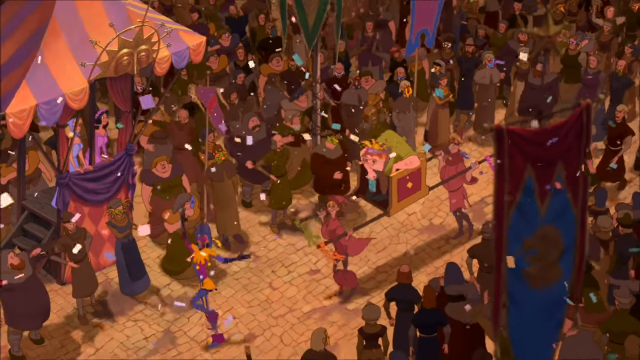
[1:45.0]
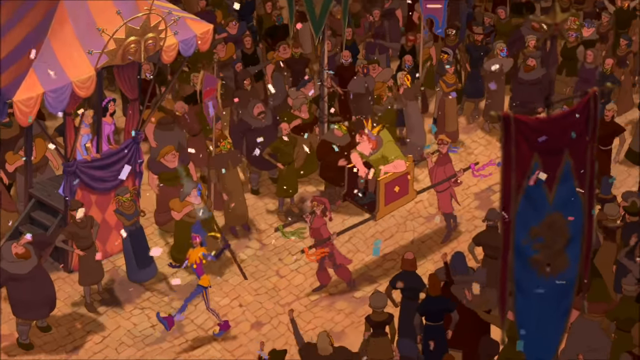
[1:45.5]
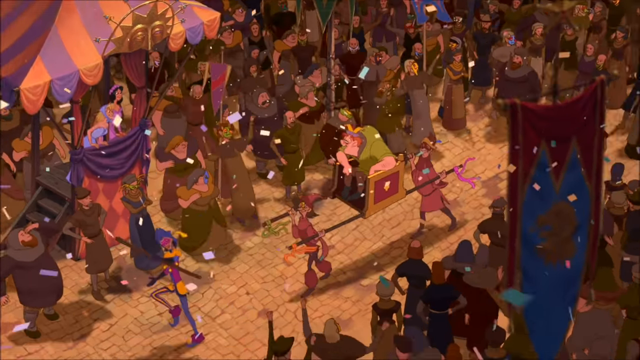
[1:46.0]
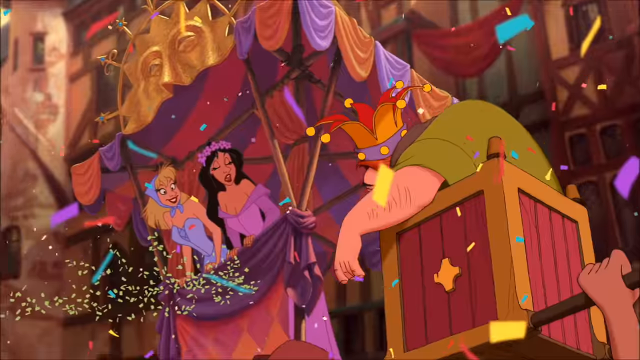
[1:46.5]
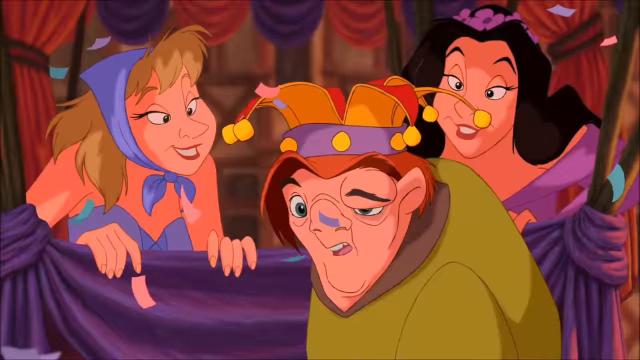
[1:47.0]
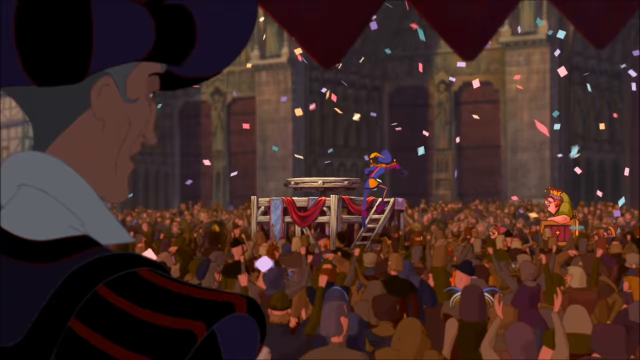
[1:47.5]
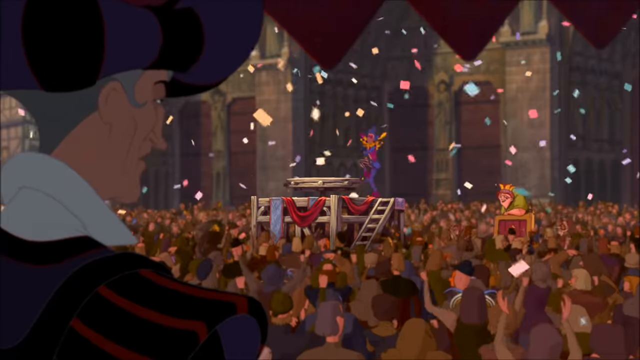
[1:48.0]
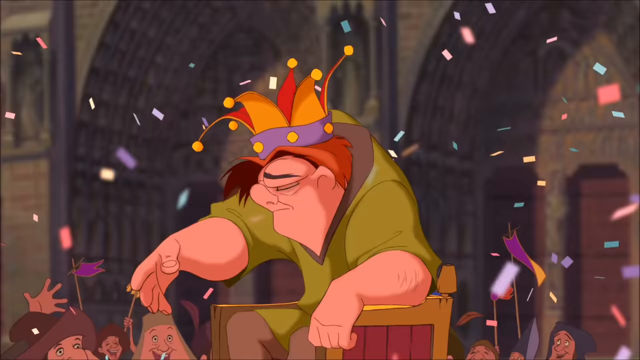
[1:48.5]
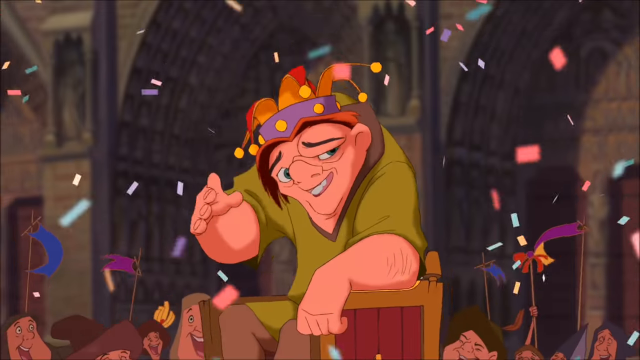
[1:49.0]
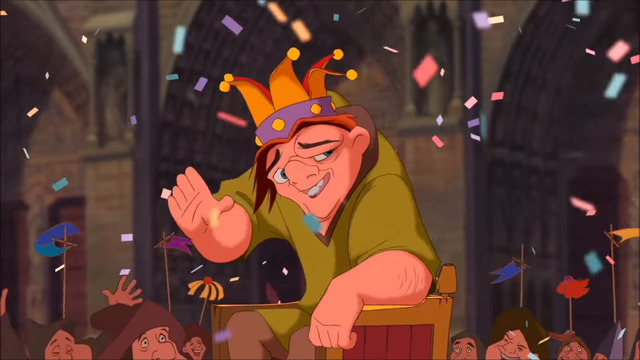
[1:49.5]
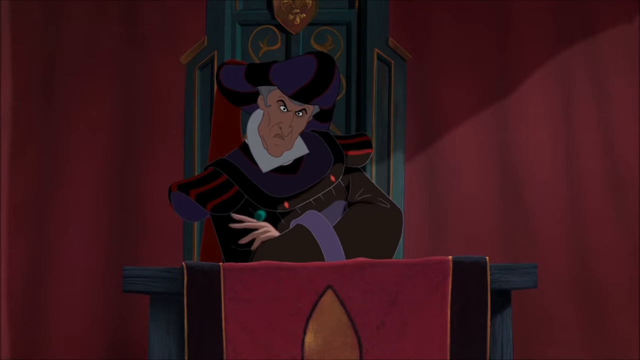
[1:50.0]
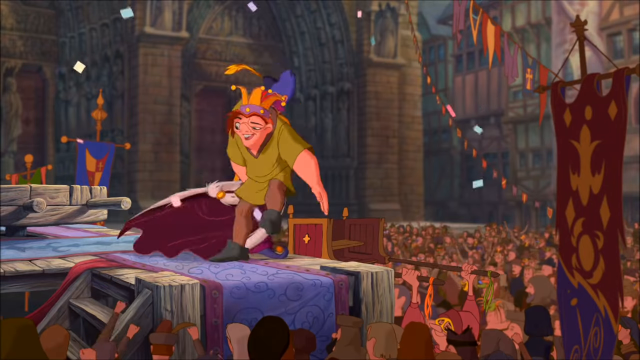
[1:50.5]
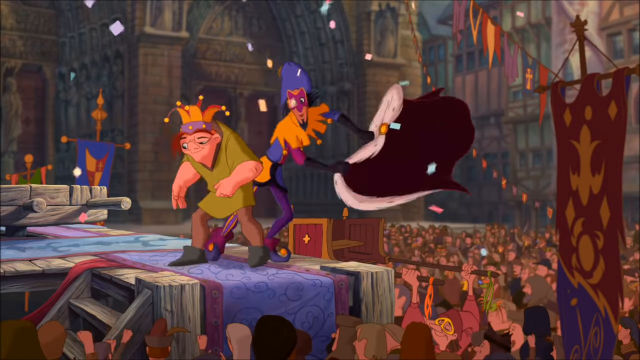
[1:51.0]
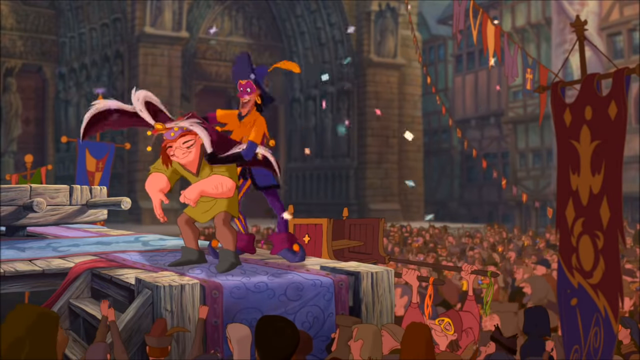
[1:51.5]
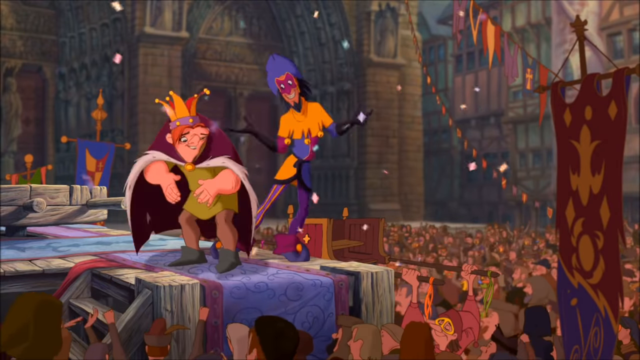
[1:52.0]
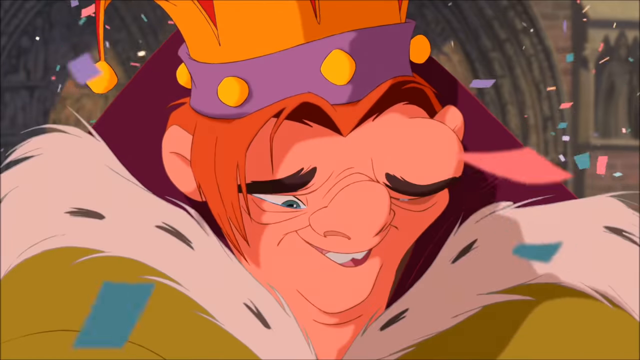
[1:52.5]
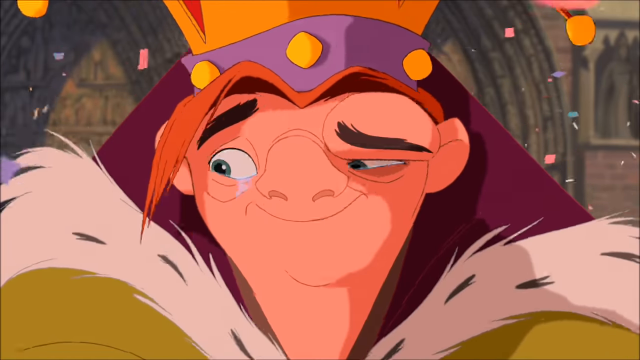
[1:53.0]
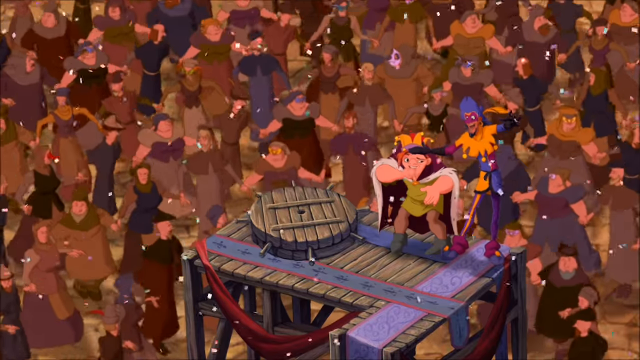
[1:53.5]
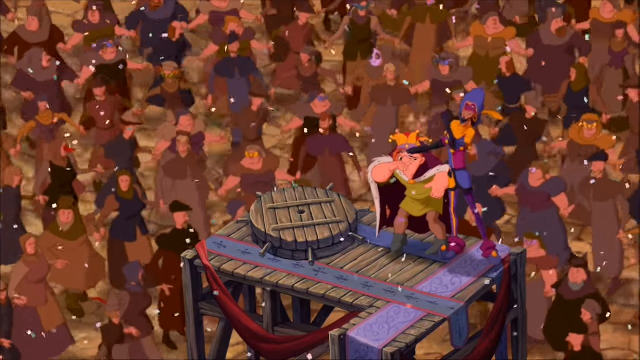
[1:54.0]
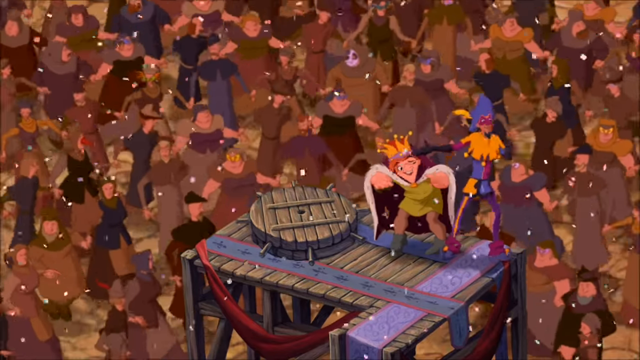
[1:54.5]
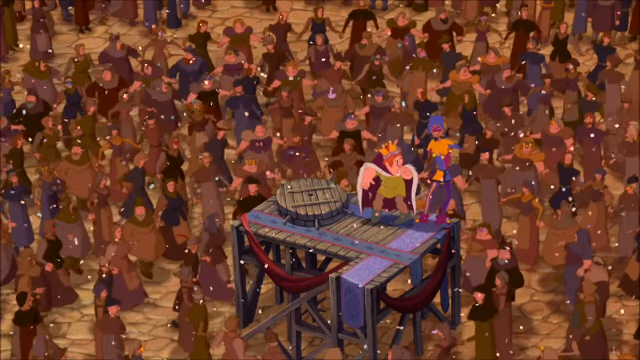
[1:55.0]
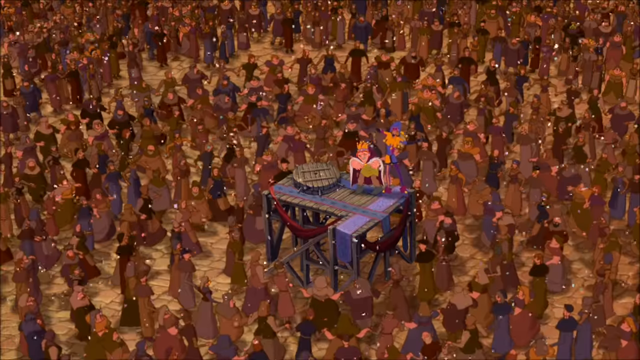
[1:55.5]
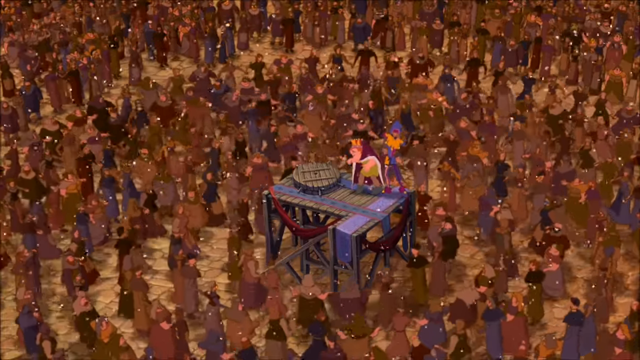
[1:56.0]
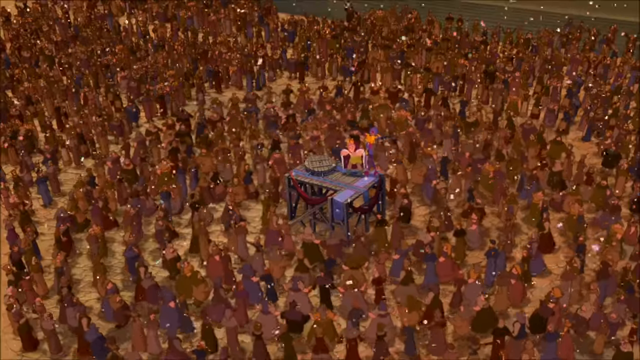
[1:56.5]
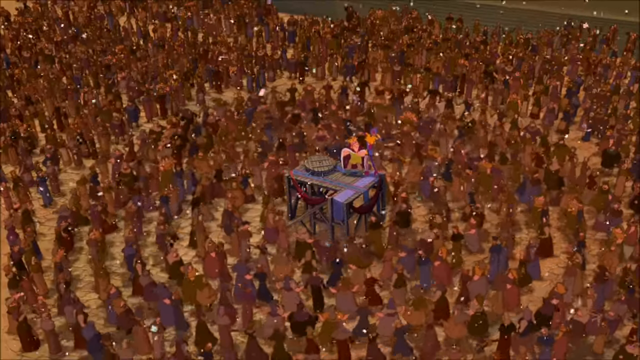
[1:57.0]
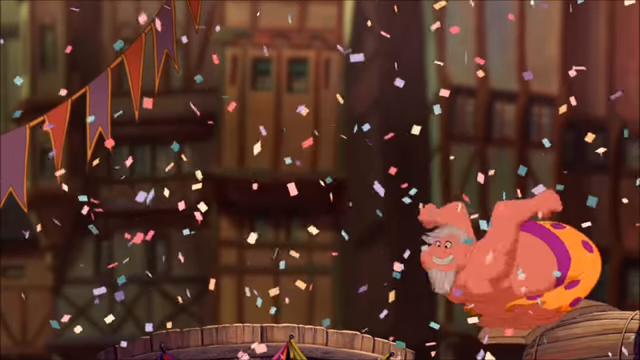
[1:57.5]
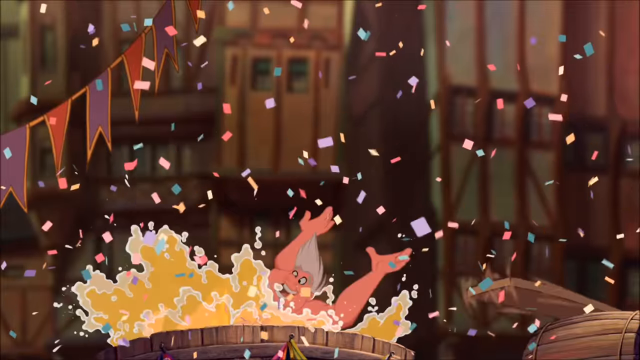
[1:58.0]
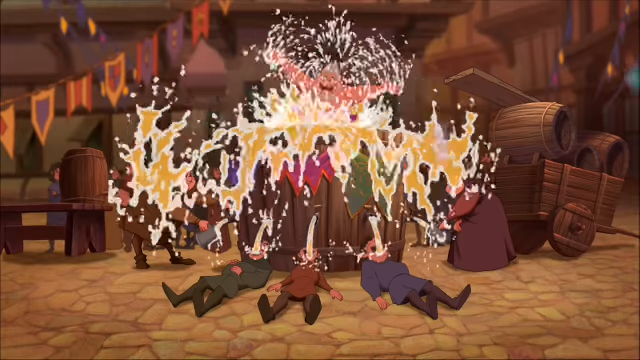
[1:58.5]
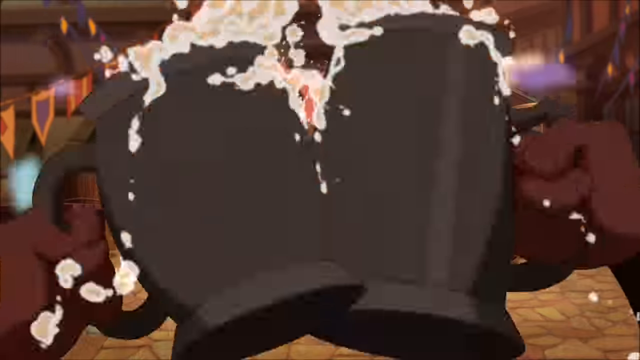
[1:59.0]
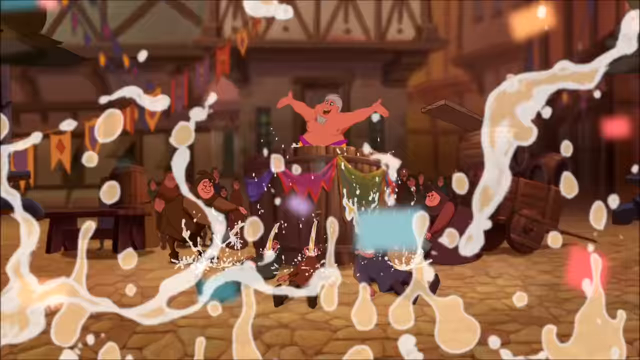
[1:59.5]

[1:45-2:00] The jester grins widely, his yellow feathers bouncing behind him. A big box rests on two poles, and inside the otherwise empty box the new king, apparently the King of Fools, is carried. Two women on a balcony in the background reach forward and kiss him on each cheek. He smiles broadly, gets a bit squashed, and waves to the crowd with a shy, pleased, somewhat ashamed look, as if unsure whether this is real. The scene switches to a distinguished man sitting in a box, possibly the real king, who seems a little impatient, arms crossed, looking askance at the new king being celebrated. On another stage, the hunchback new king has a sable put around his shoulders while the crowd dances around him, and he looks very pleased.